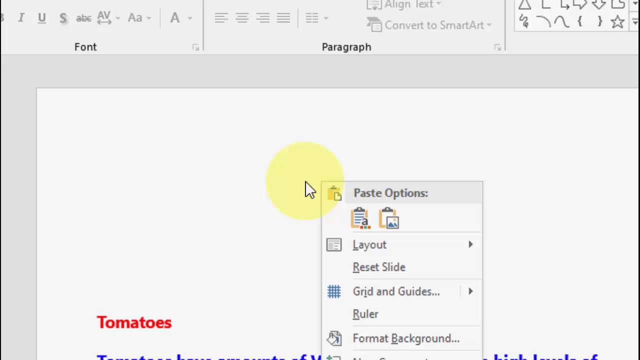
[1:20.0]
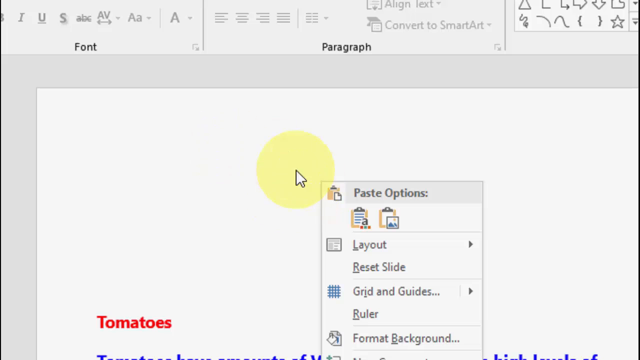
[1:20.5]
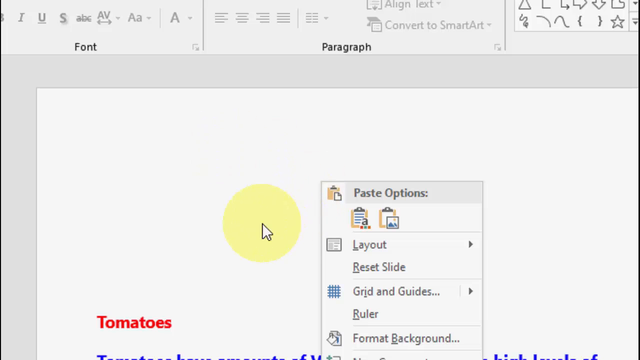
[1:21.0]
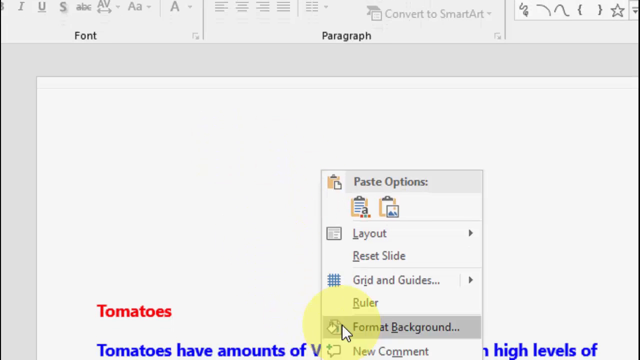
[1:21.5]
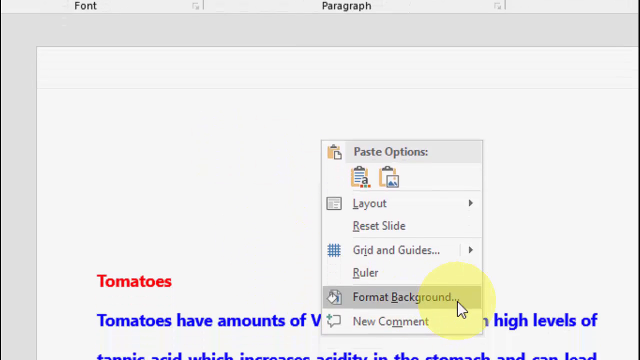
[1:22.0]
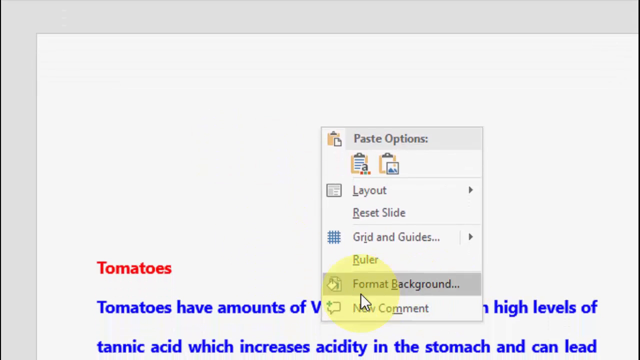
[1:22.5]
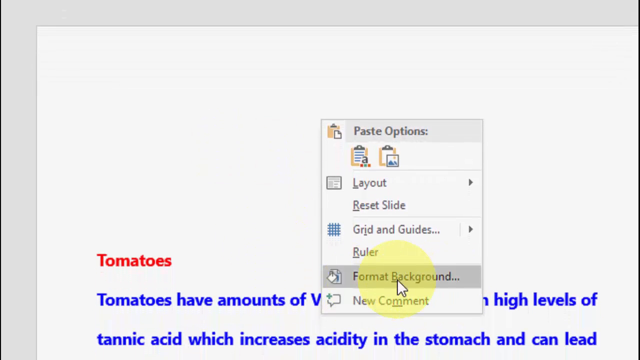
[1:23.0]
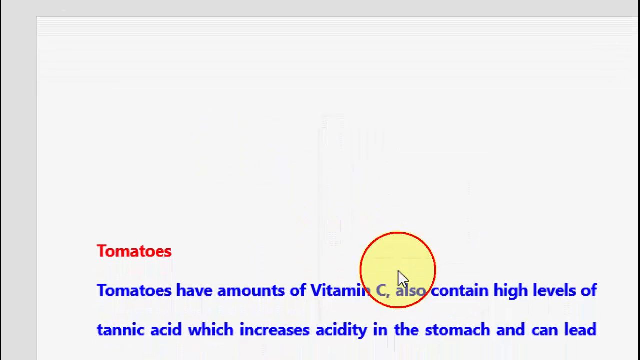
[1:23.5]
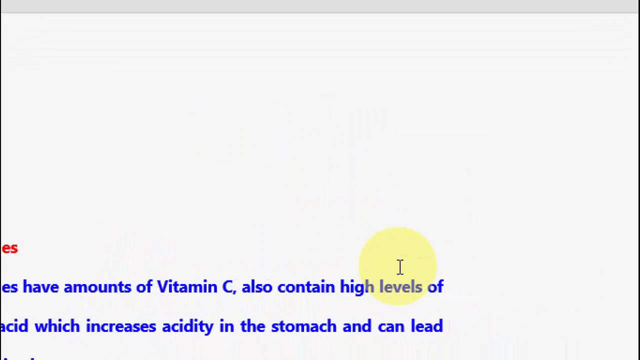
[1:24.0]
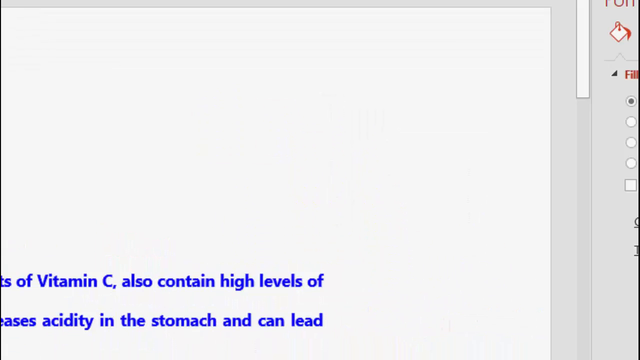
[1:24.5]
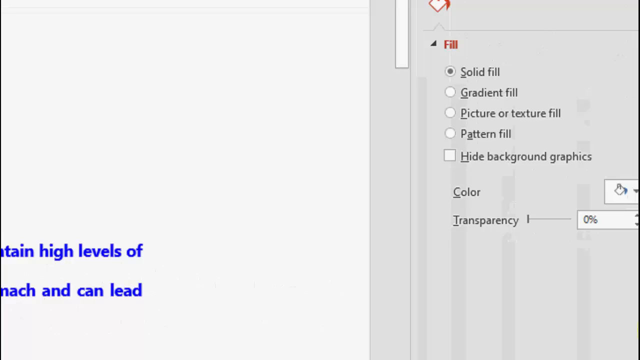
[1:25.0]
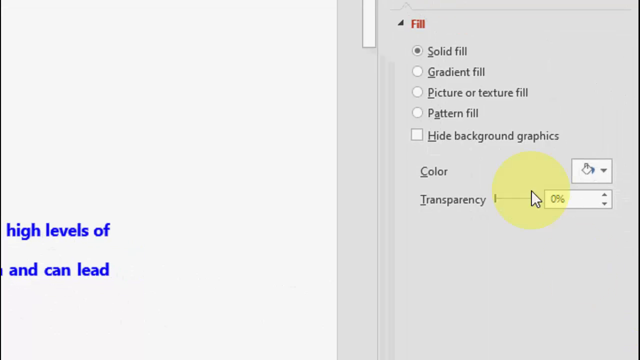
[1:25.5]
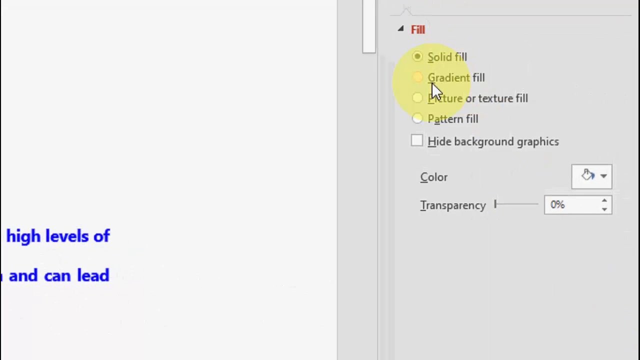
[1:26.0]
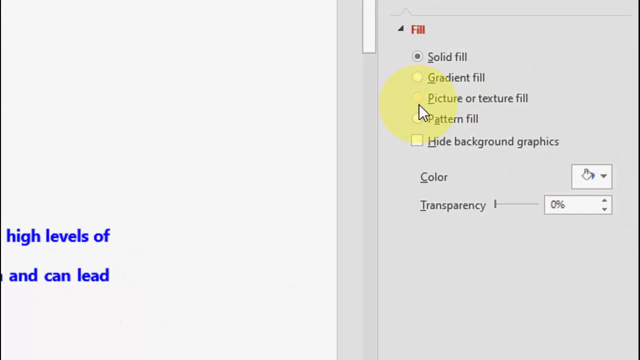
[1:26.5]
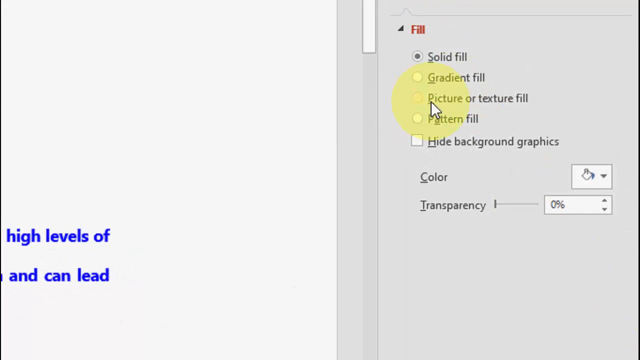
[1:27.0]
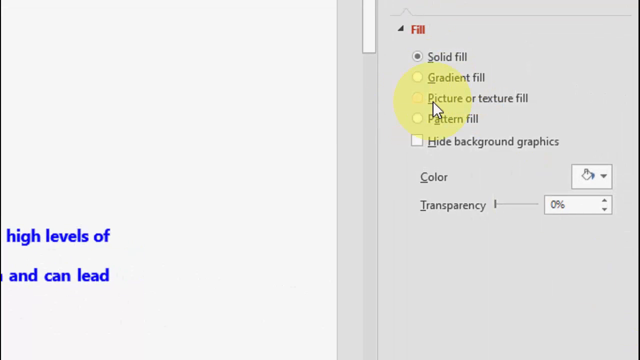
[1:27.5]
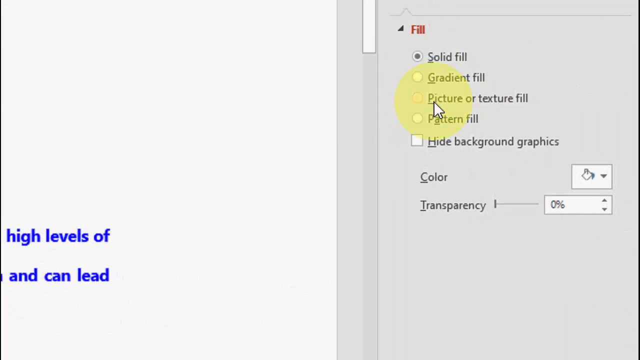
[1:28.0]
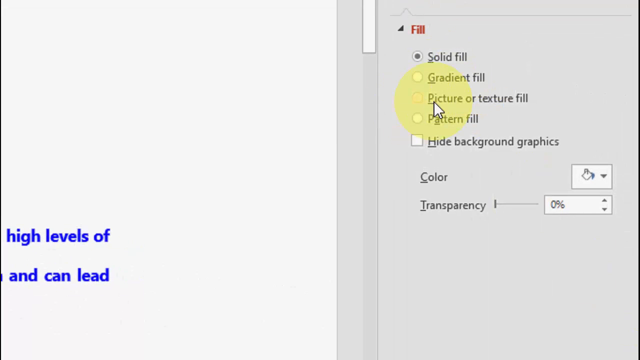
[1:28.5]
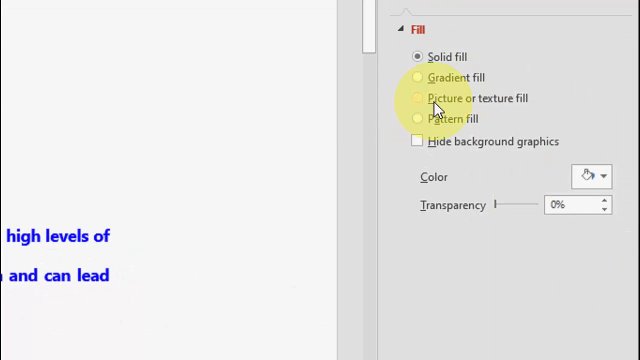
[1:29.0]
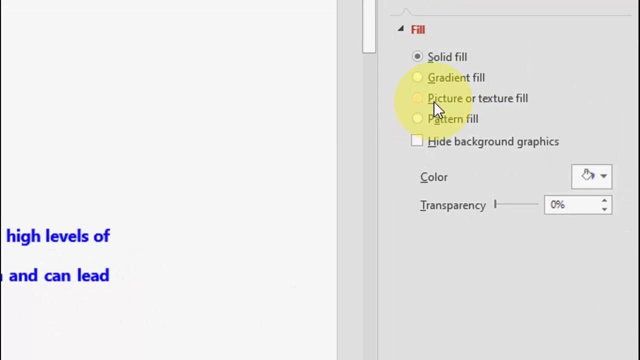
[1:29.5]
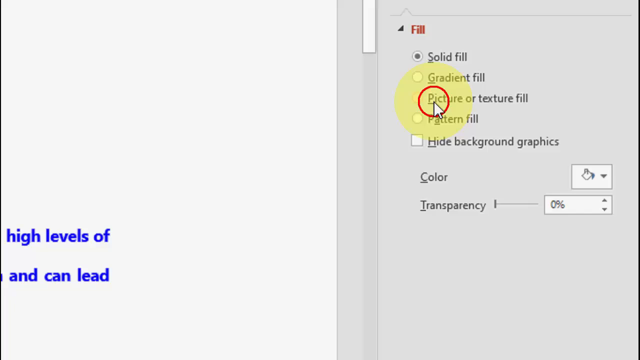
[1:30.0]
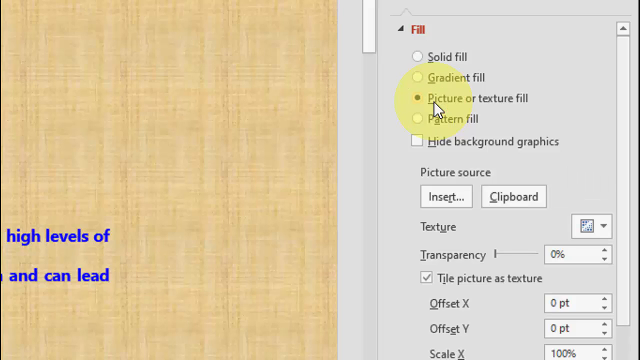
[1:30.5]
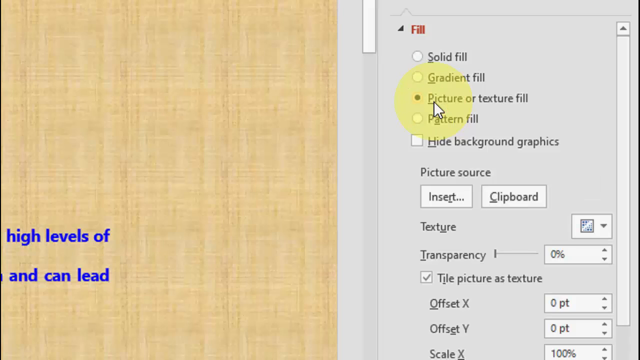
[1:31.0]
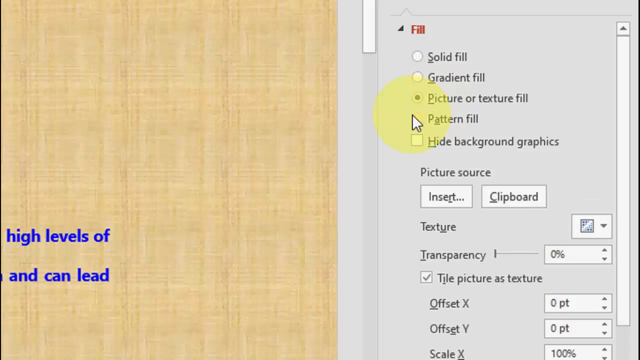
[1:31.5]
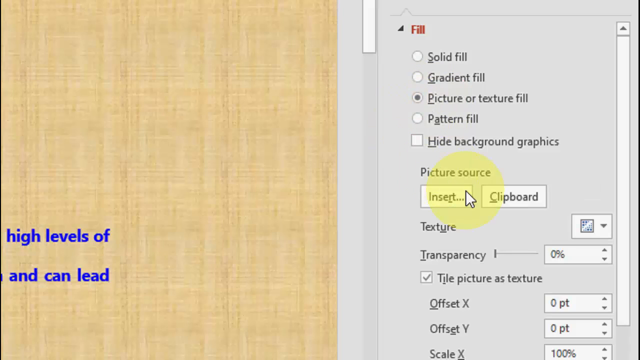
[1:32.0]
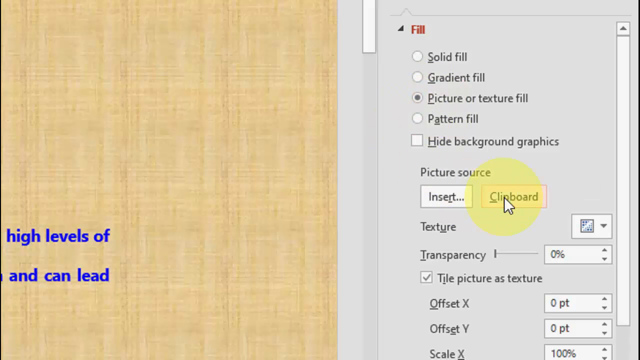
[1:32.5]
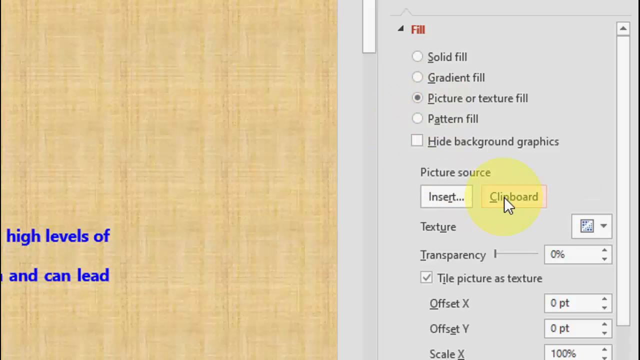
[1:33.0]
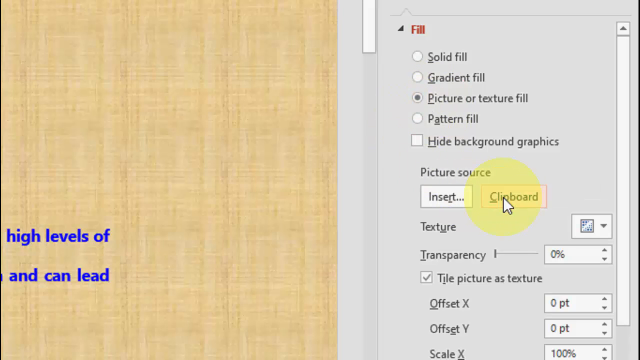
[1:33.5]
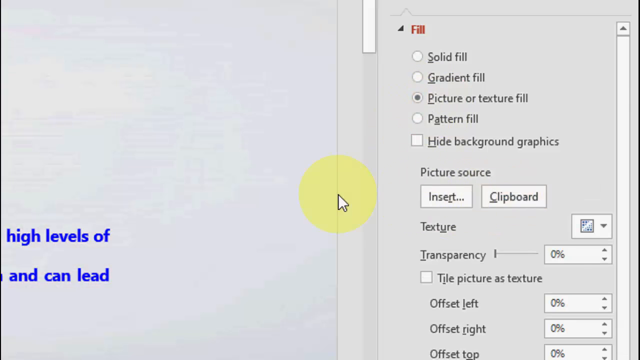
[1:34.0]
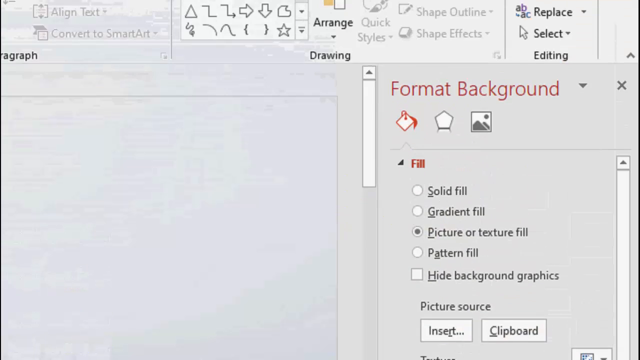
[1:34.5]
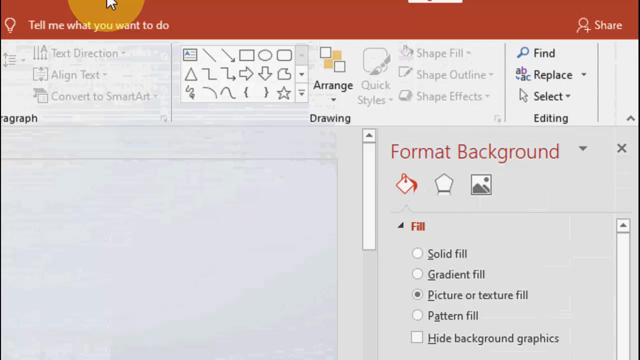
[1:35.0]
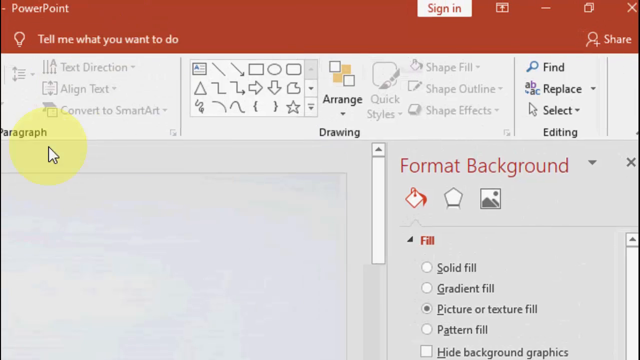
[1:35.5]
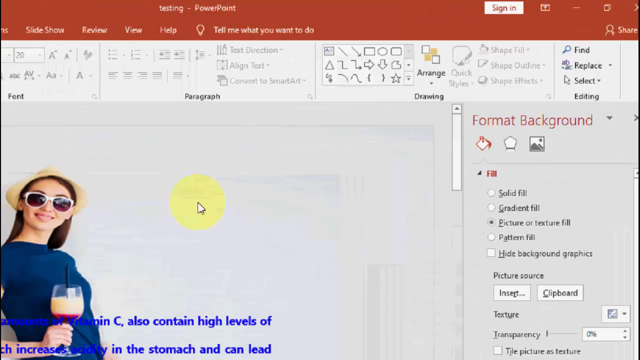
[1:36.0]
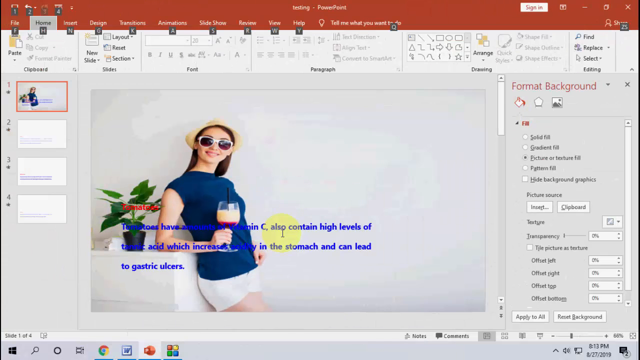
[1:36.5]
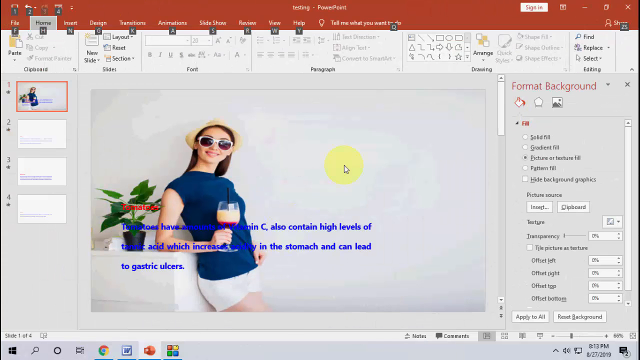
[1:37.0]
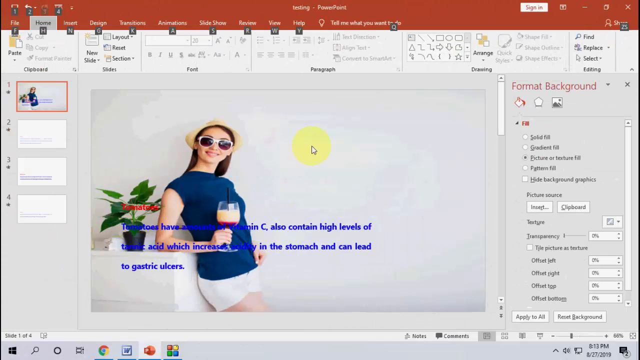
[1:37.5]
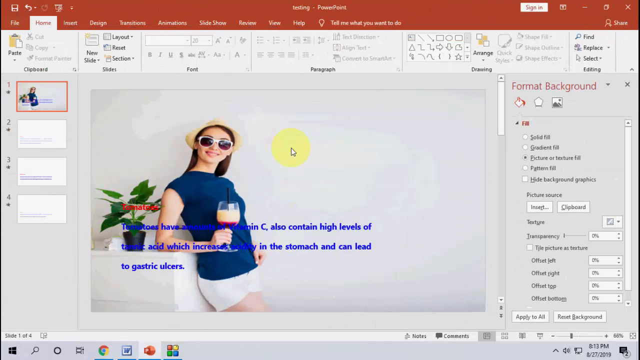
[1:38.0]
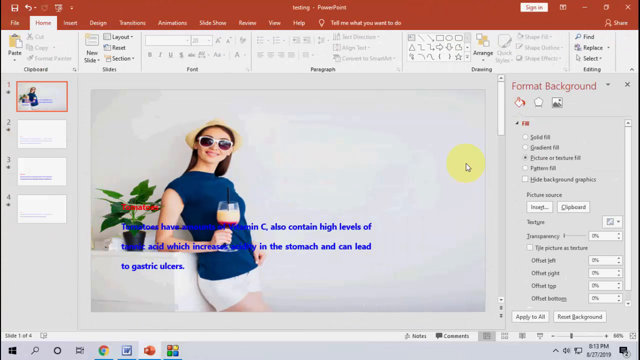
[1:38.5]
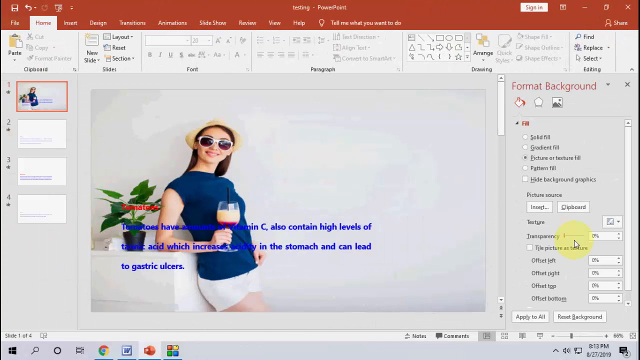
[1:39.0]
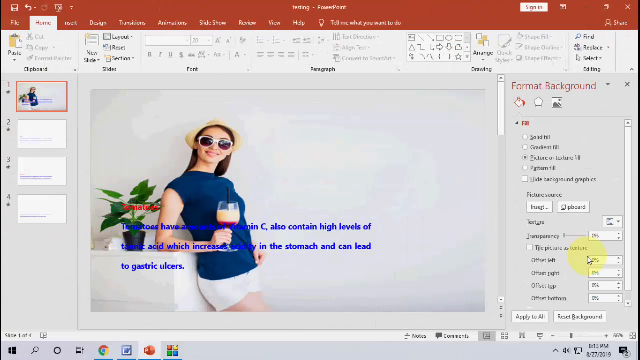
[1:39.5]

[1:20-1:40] The PowerPoint slide is being edited, and the view focuses on the cursor, which has a yellow circle around it, and a drop-down box that says "paste options" with several options including layout, reset slide, grid and guides, and ruler. The cursor kind of moves around the screen a little and then chooses format background. The view goes to the right, showing more options on the right side of the screen under the red header "fill": solid fill, gradient fill, picture or texture fill, pattern fill, and hide background graphics. The cursor hovers over picture or texture fill and clicks it, and something like a thatched wood background appears on the slide. Clipboard is clicked, then the view goes up to the top and scrolls out, and the picture of the woman is back as the background of the slide, behind the text. The red title says "tomatoes" with blue text underneath, and behind it is the background image of the woman holding a wine glass and smiling at the camera. Most of the woman is on the left side of the image, and the right side is all blank space.